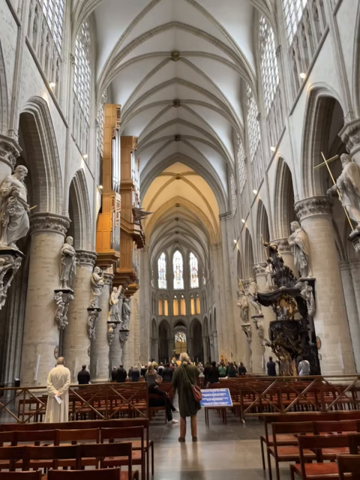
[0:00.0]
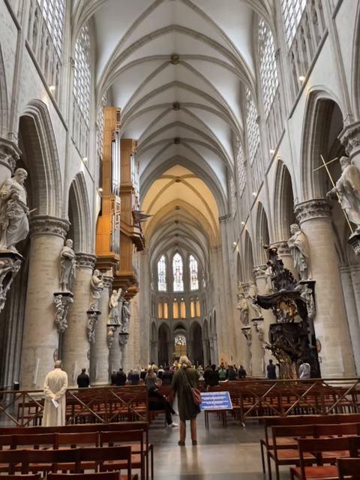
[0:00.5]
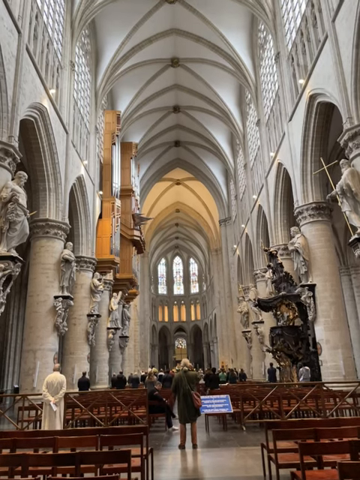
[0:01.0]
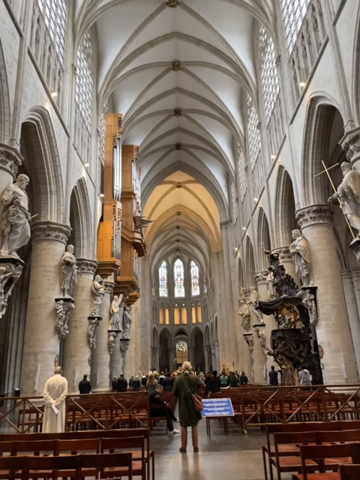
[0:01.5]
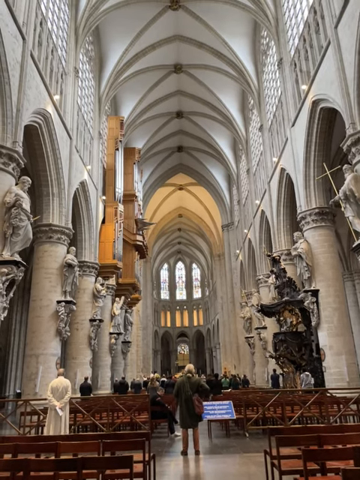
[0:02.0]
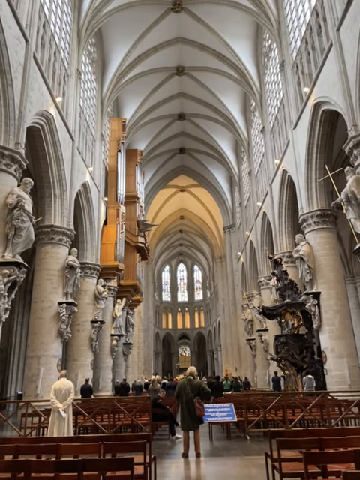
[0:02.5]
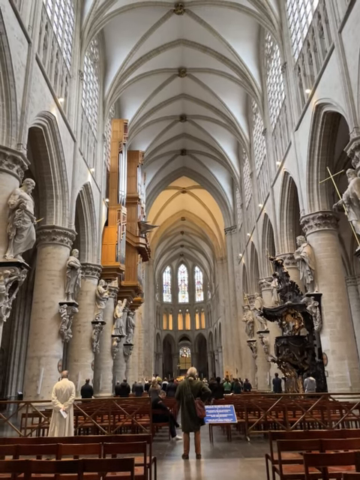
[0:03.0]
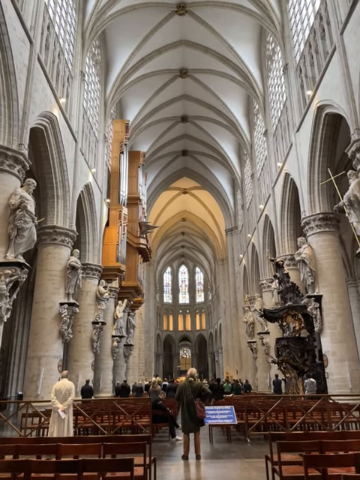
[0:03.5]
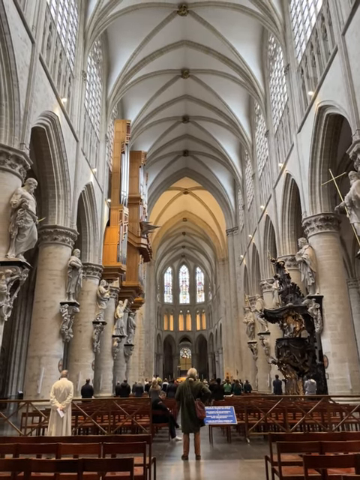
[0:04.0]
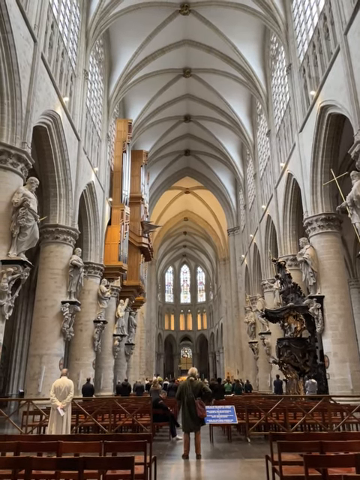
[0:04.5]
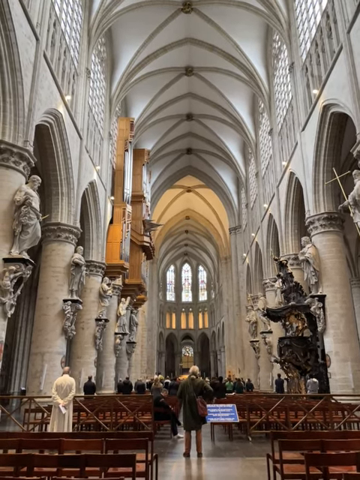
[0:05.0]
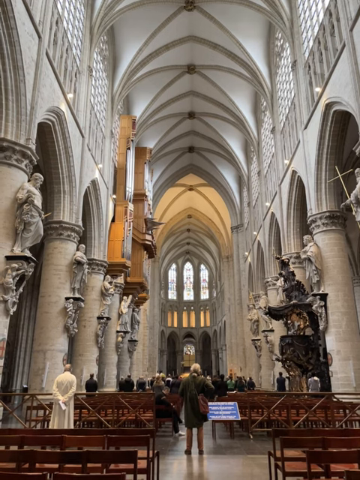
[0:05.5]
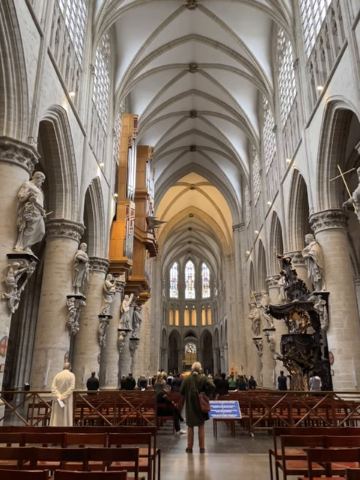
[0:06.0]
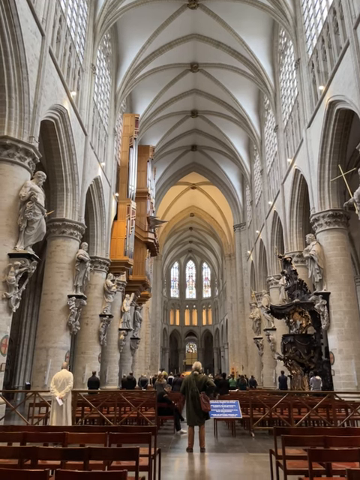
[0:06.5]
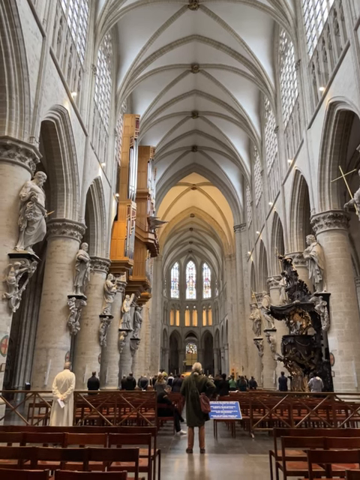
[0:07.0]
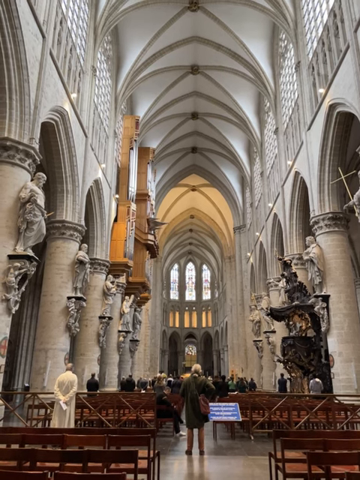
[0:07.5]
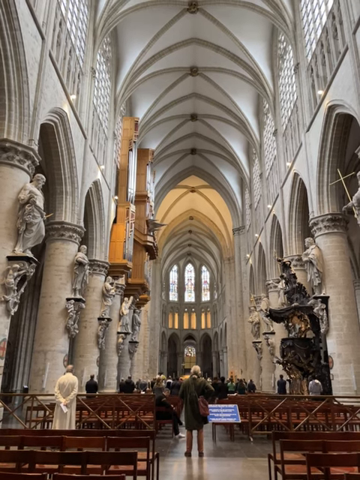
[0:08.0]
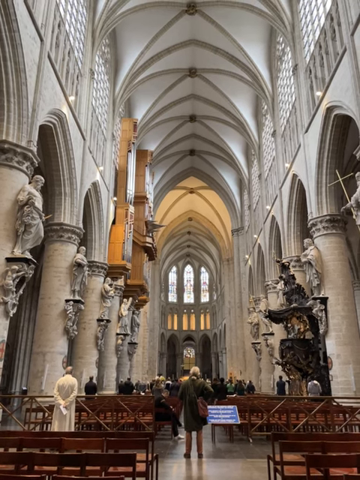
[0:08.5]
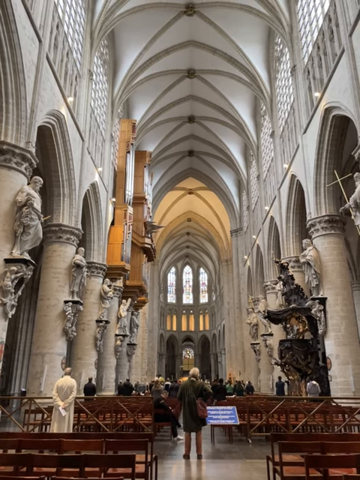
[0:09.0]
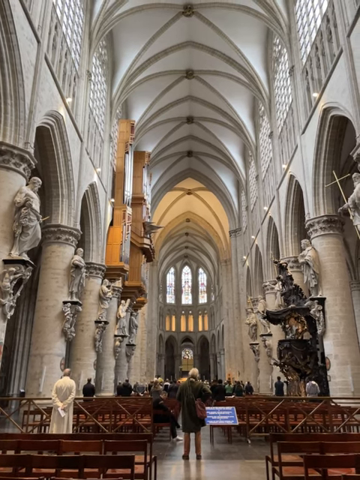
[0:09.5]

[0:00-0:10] The view is from the entrance of a large white cathedral, with people standing at the far end. In the foreground is a man in a white robe with his back turned to the camera. Multiple rows of brown pews fill the nave, and on the left and right sides of the pews are large white columns attached to arches, with religious figures attached to each column. At the far end of the cathedral, near the top, are stained glass windows, and multiple arches make up the white roof of the ceiling.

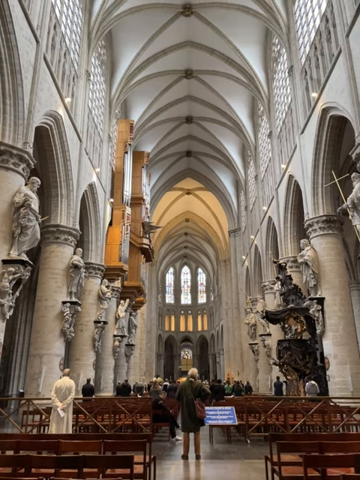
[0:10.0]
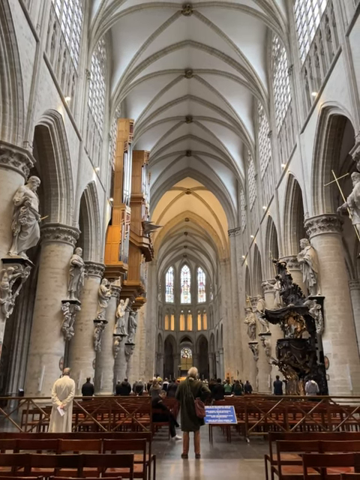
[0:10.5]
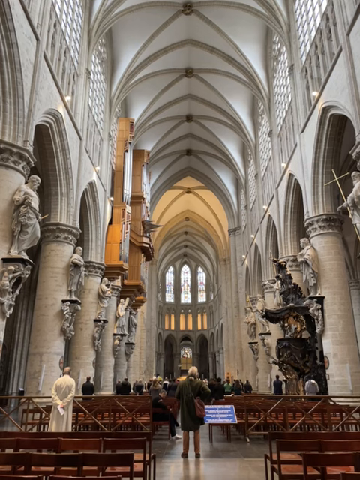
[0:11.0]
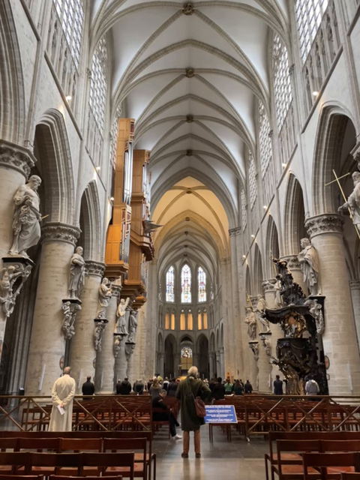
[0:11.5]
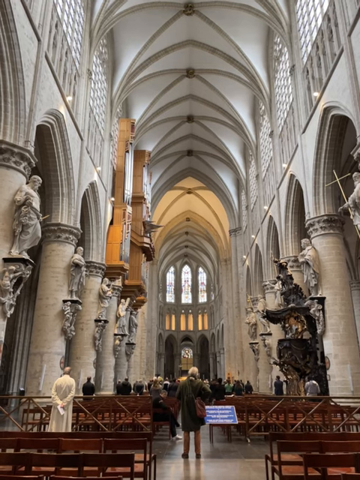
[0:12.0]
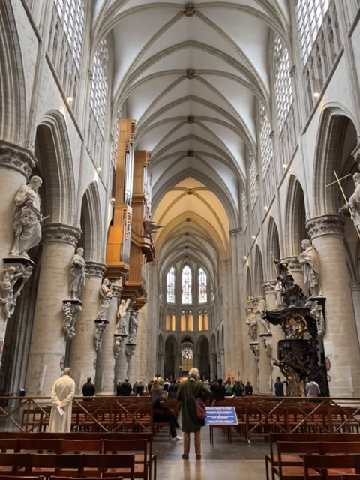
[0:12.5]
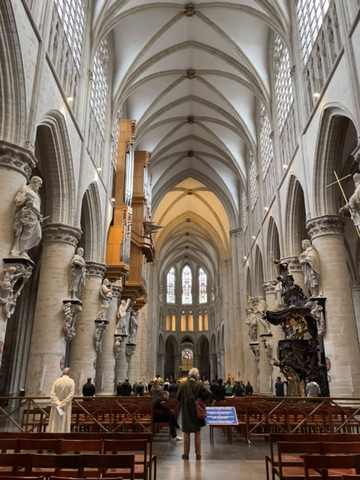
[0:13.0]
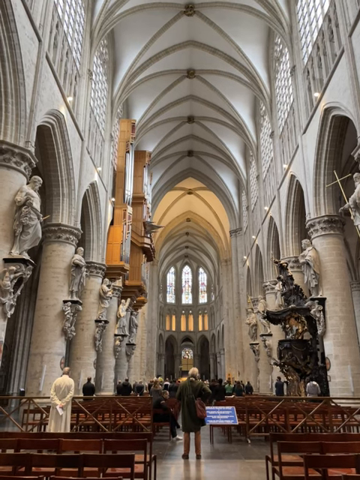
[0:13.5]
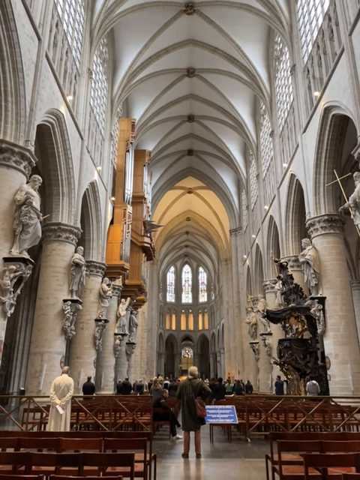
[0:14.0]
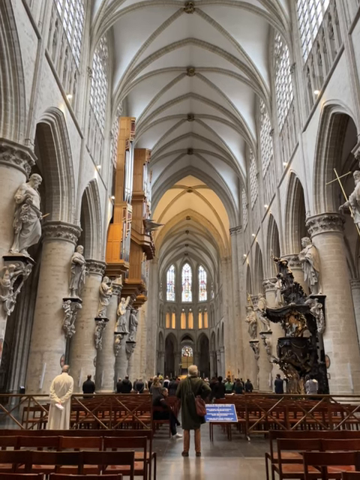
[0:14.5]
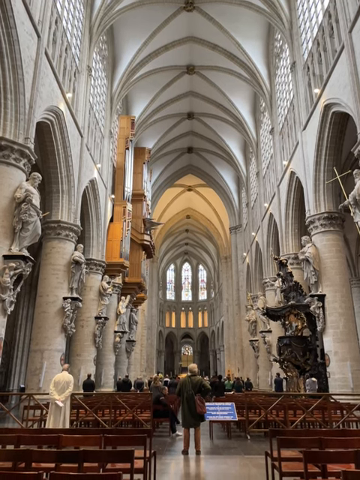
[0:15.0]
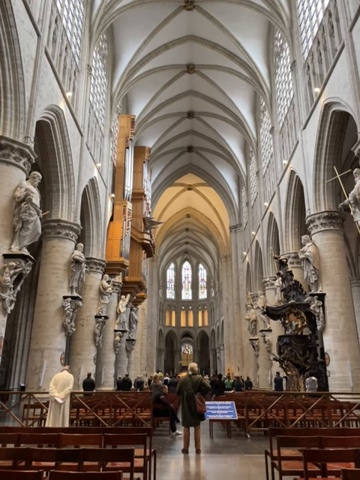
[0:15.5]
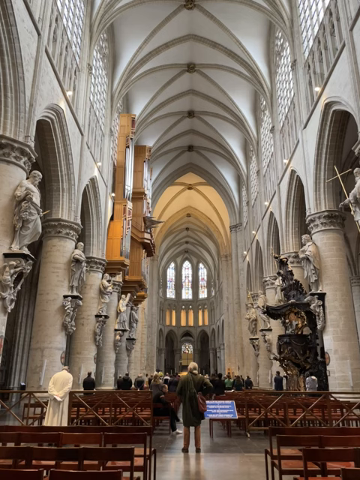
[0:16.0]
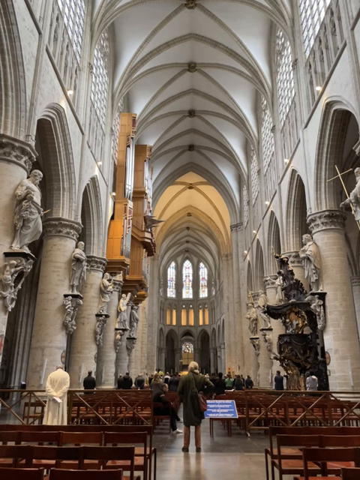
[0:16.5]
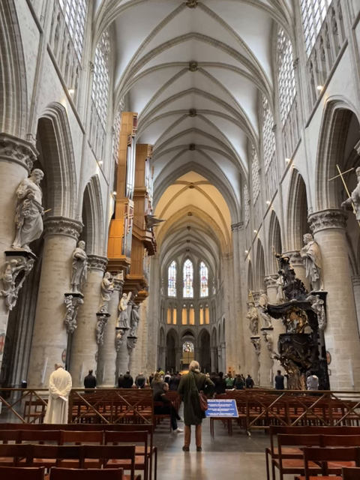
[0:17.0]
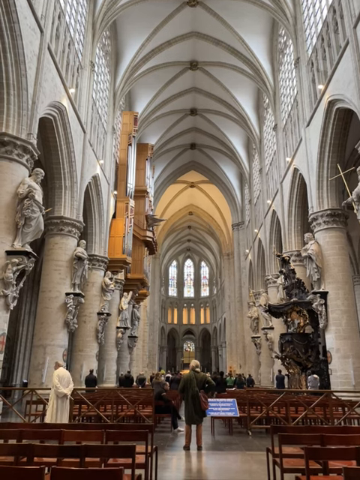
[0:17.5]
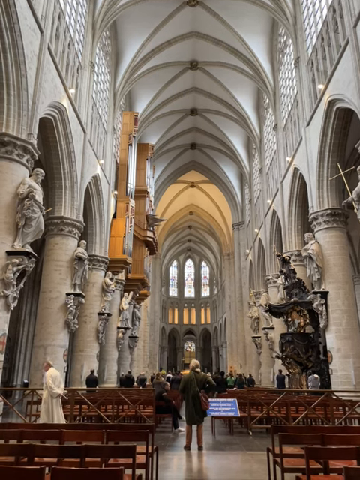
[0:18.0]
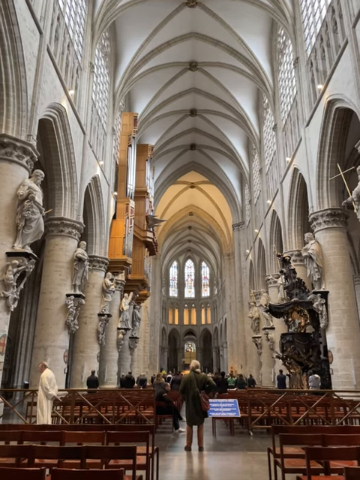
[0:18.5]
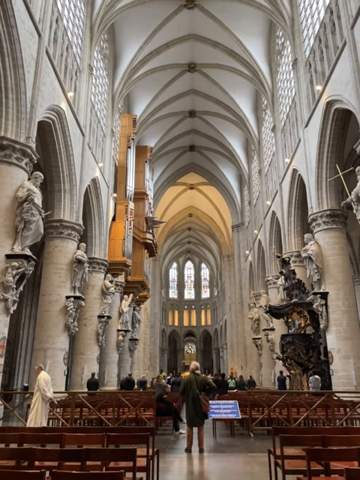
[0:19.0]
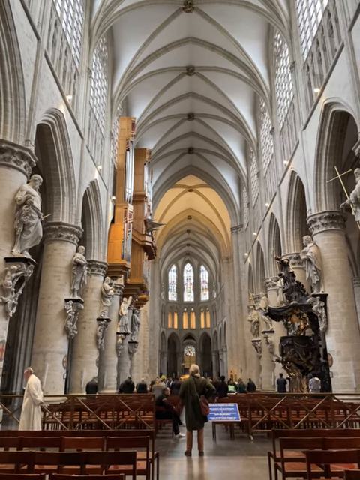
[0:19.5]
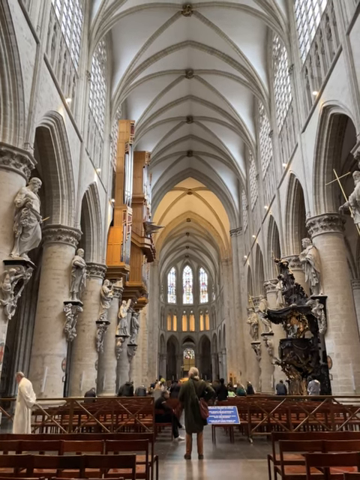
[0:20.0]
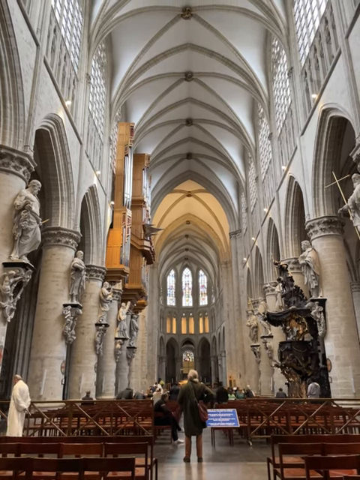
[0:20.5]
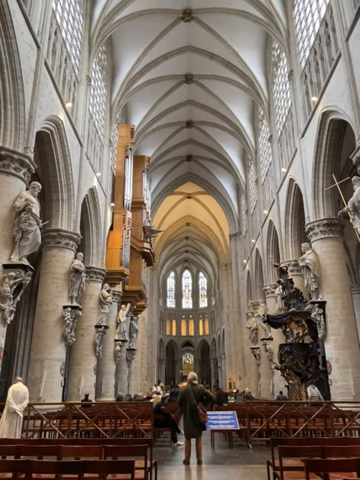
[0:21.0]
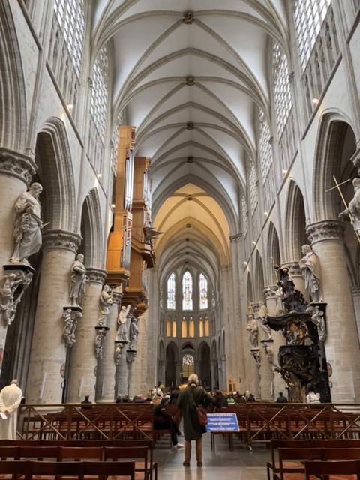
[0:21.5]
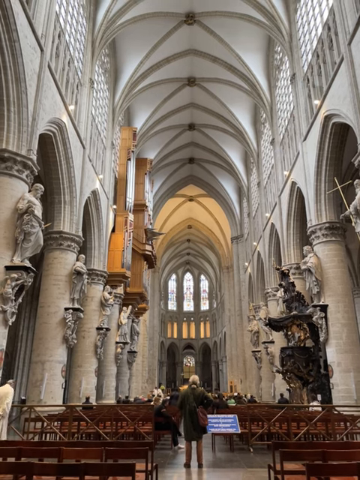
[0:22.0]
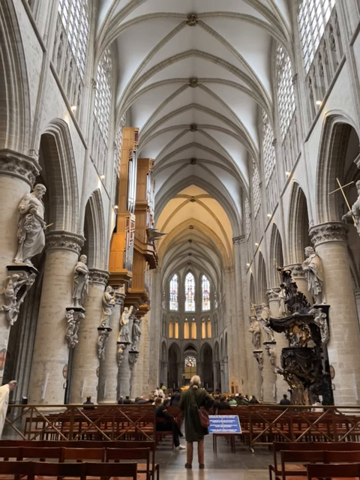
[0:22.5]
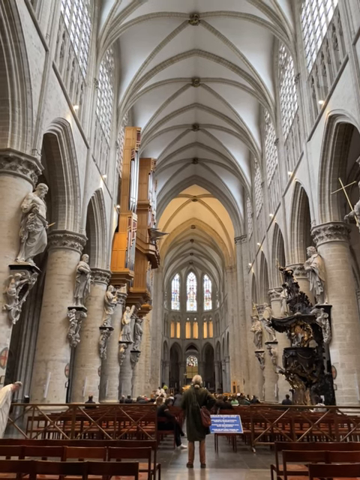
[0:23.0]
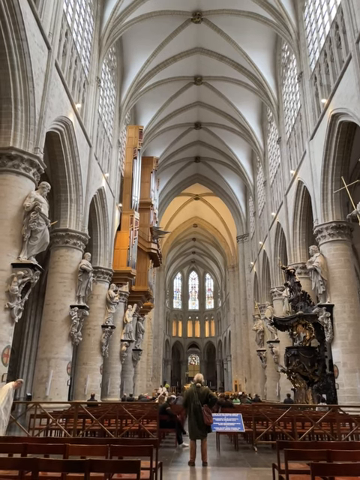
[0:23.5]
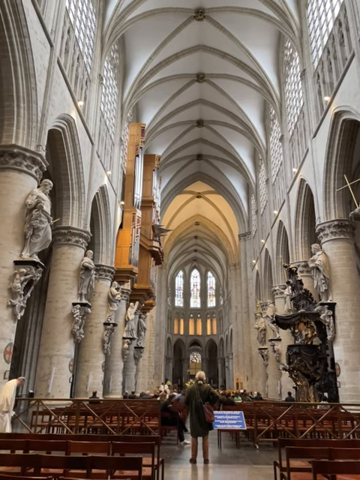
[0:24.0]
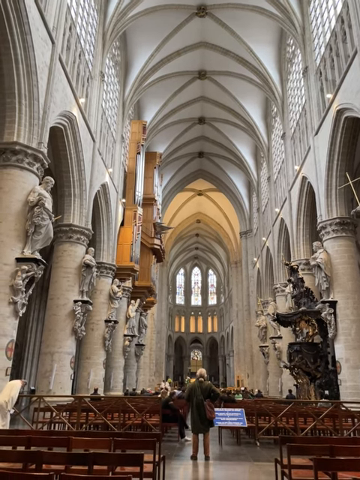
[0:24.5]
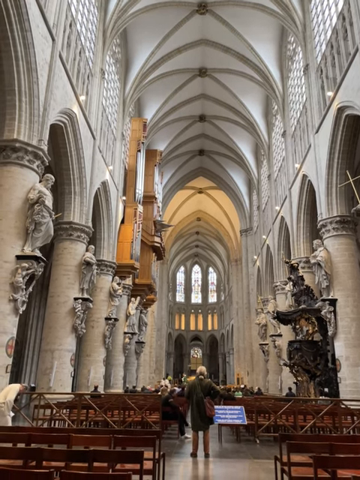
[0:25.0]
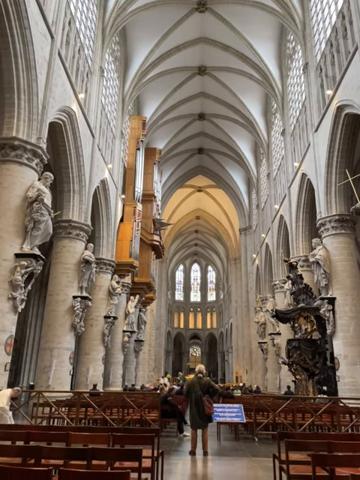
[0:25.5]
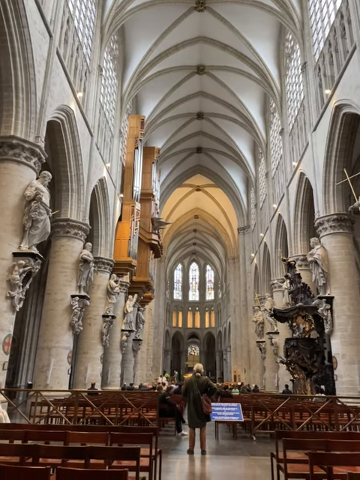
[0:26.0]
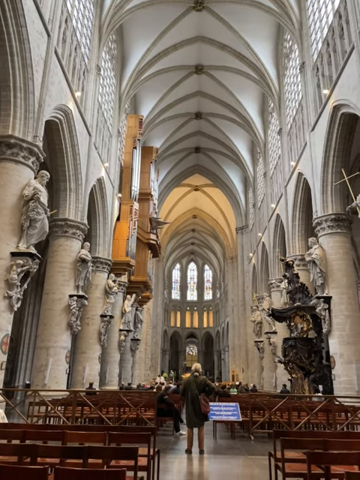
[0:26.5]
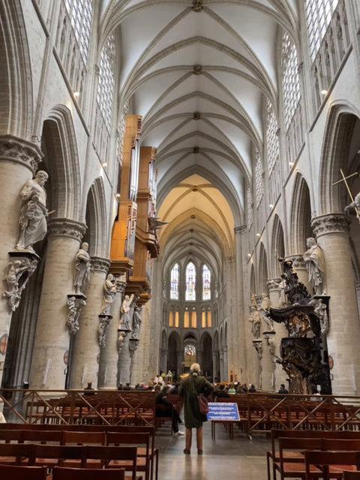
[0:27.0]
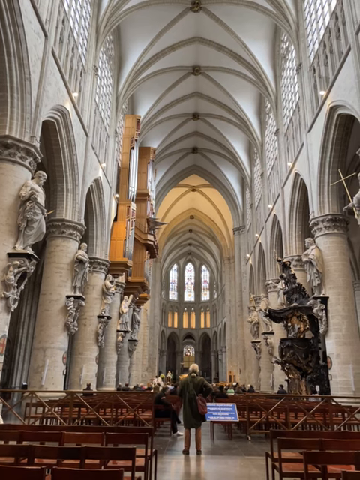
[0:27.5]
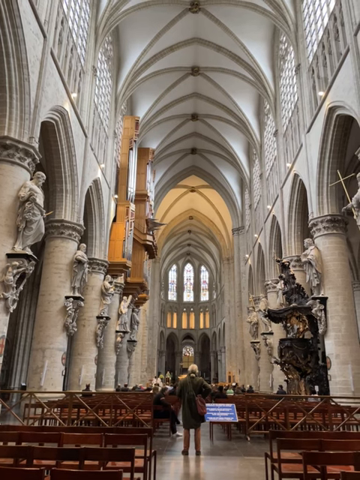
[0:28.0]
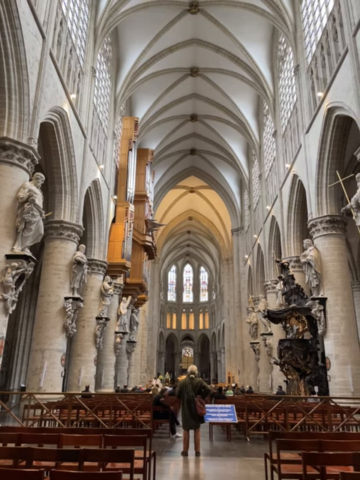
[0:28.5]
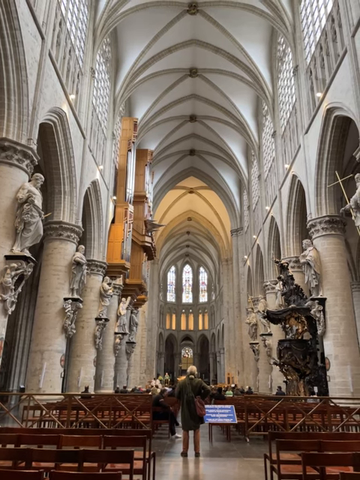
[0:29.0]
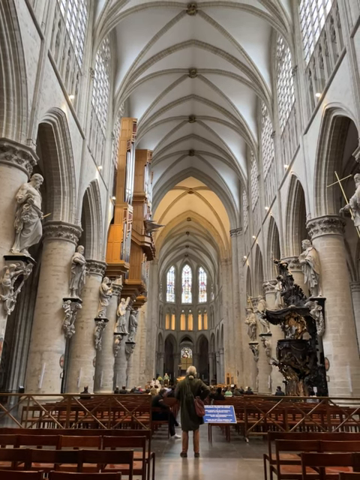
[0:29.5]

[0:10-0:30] Inside a cathedral, a group of people stands near the front. In the foreground is a man in a white robe, seen from behind, with his hands behind his back. As the shot progresses, the crowd sits down in the pews, and the man in the white robe walks to the left side of the frame and sits down as well. There are columns to the left and right of the pews, with statues of religious figures attached to each column, and the columns form arches that go up toward the front of the cathedral. In the background is a stained glass window made up of three arches, each with its own stained glass.